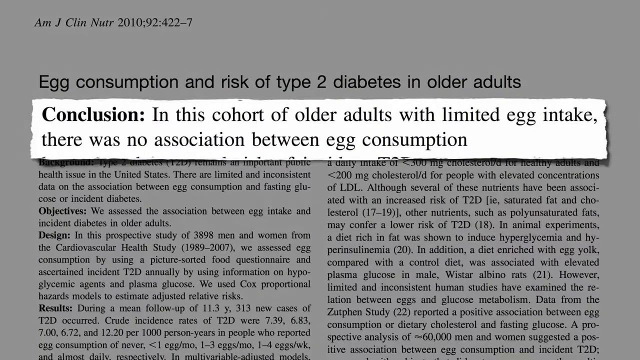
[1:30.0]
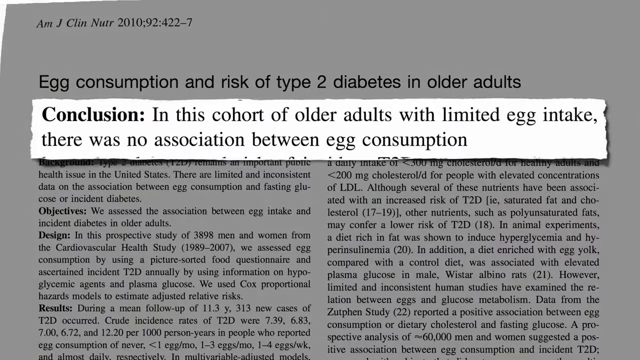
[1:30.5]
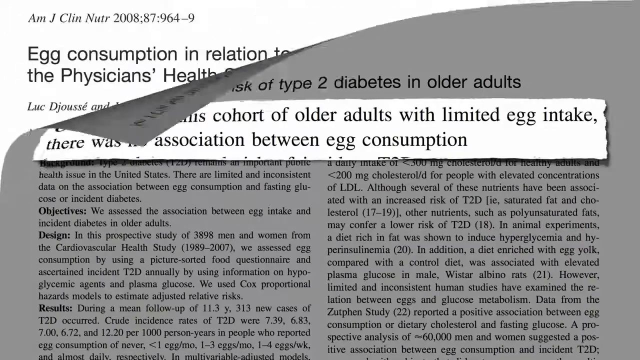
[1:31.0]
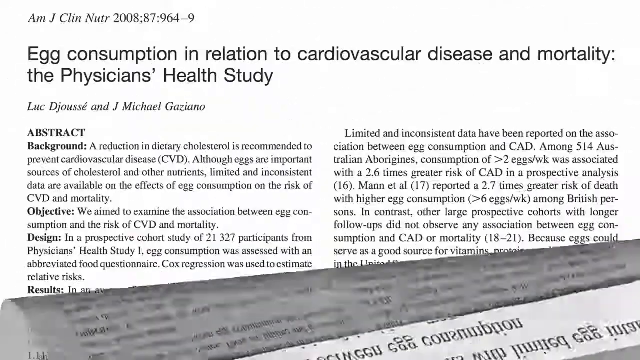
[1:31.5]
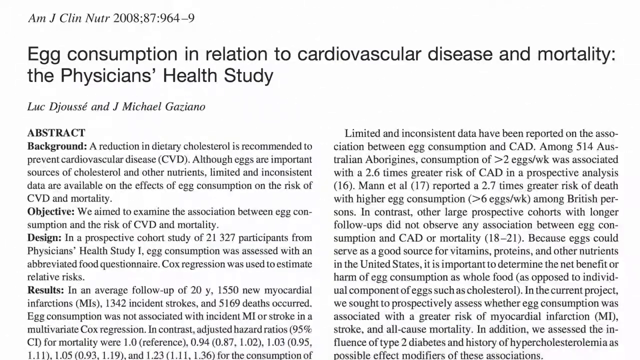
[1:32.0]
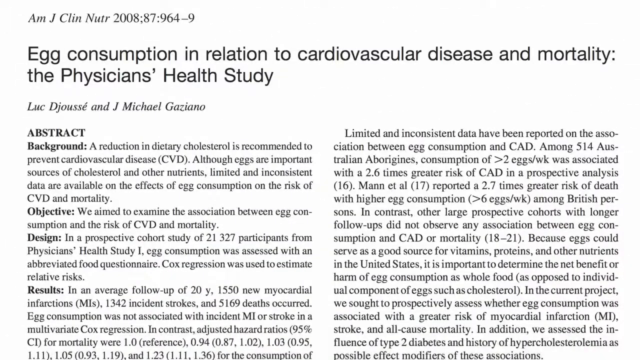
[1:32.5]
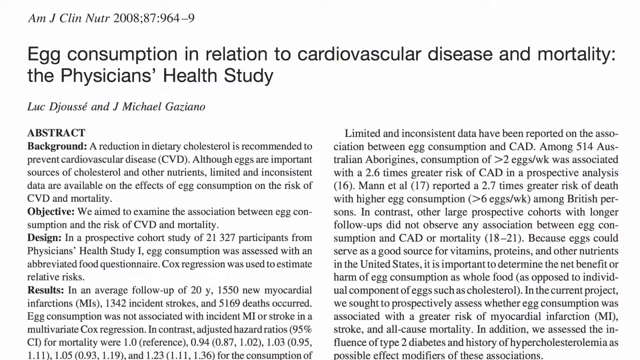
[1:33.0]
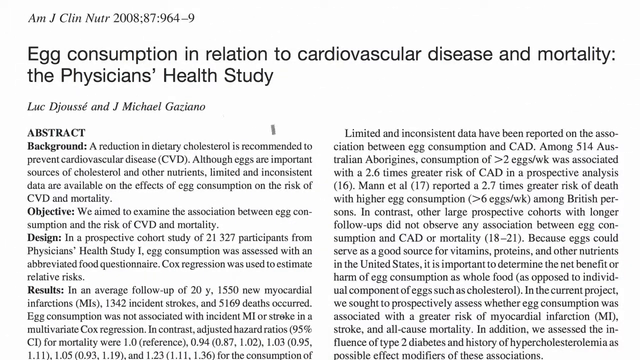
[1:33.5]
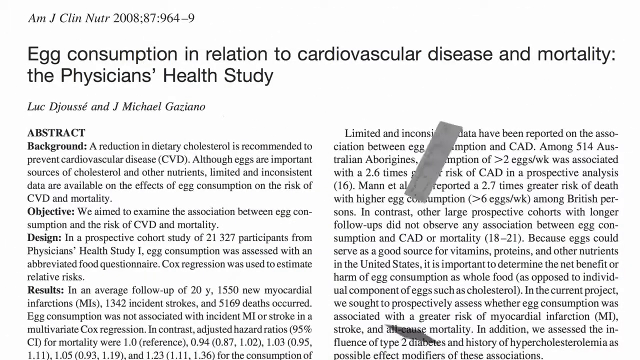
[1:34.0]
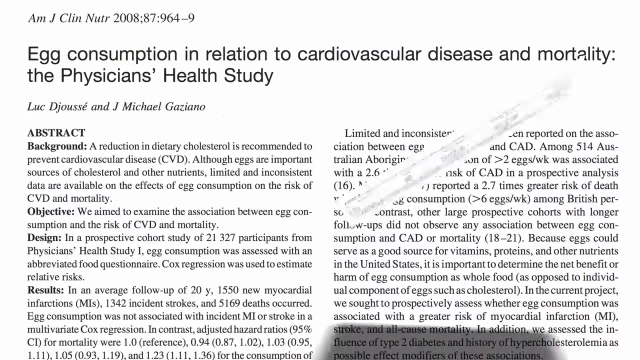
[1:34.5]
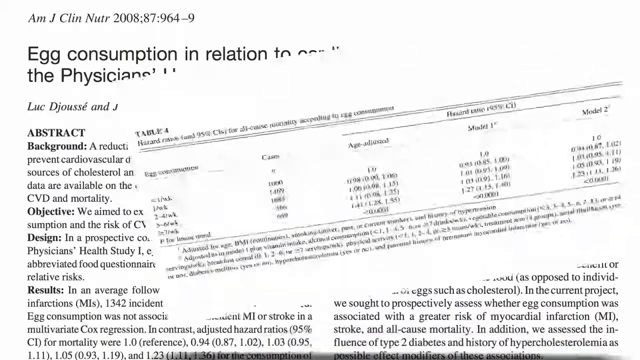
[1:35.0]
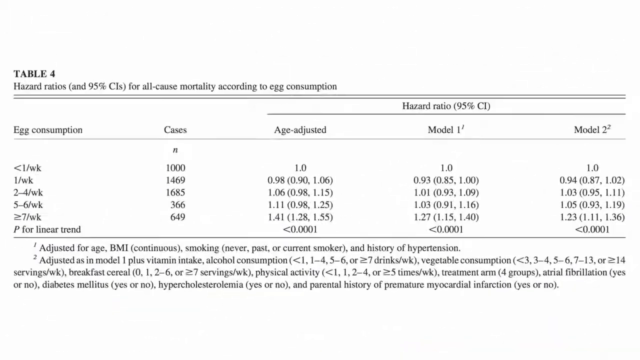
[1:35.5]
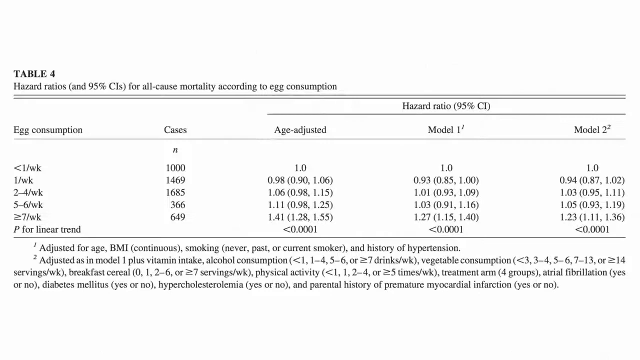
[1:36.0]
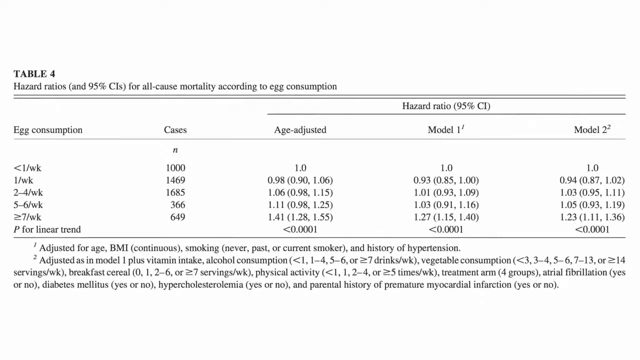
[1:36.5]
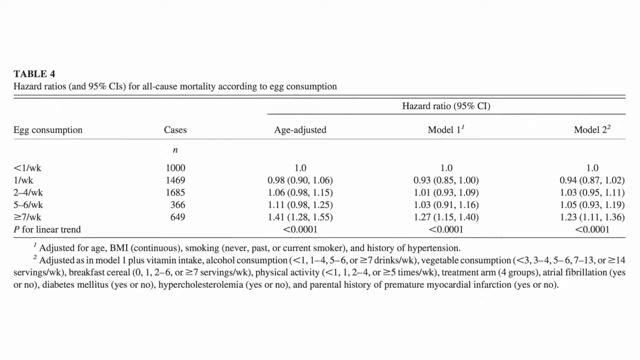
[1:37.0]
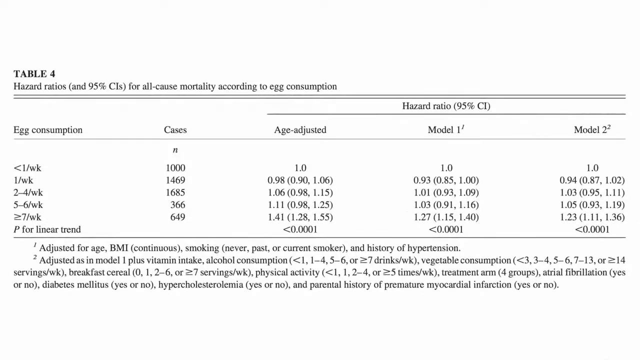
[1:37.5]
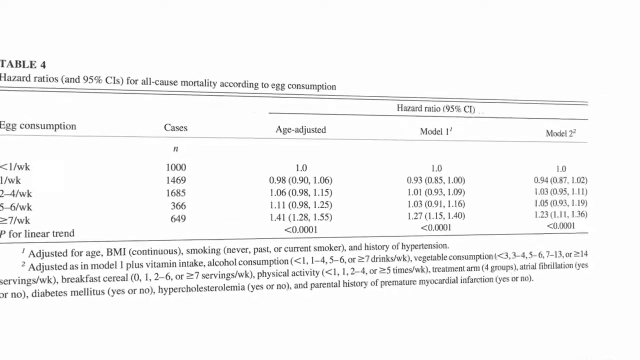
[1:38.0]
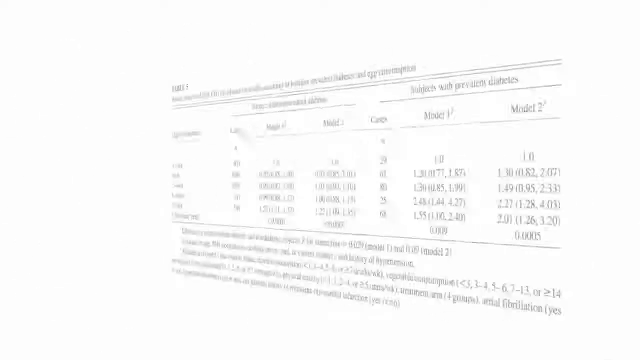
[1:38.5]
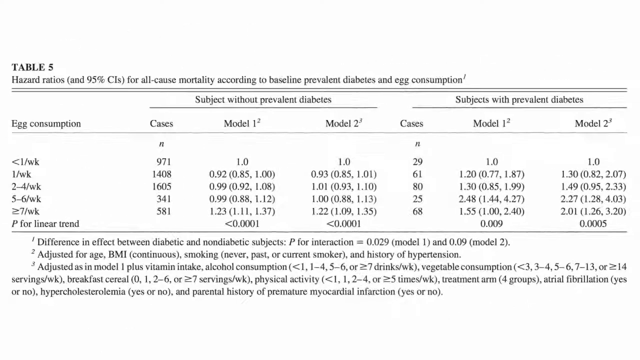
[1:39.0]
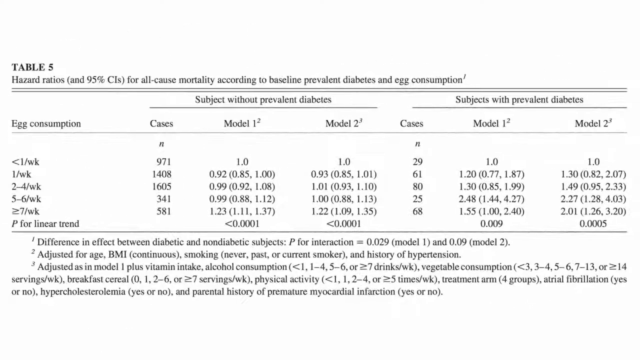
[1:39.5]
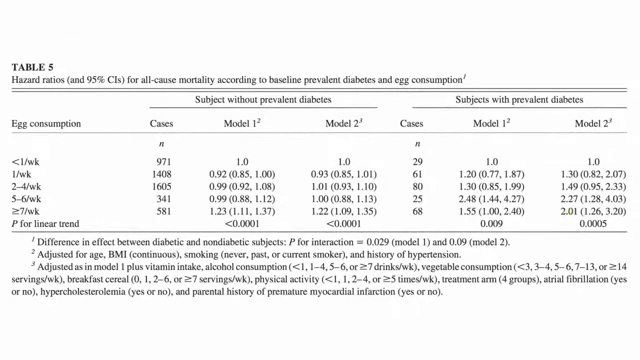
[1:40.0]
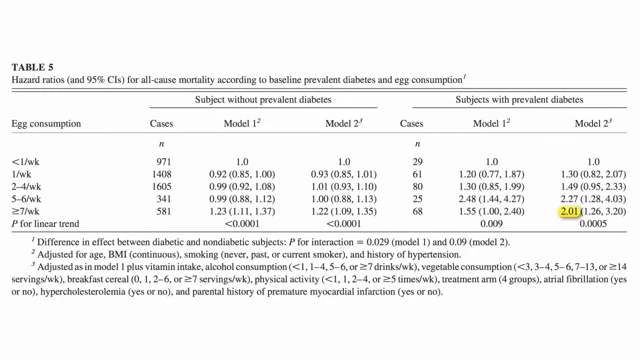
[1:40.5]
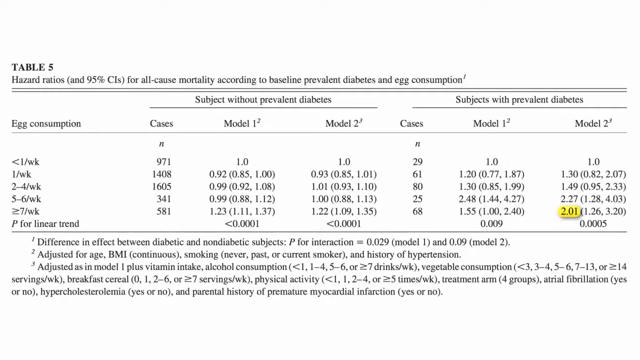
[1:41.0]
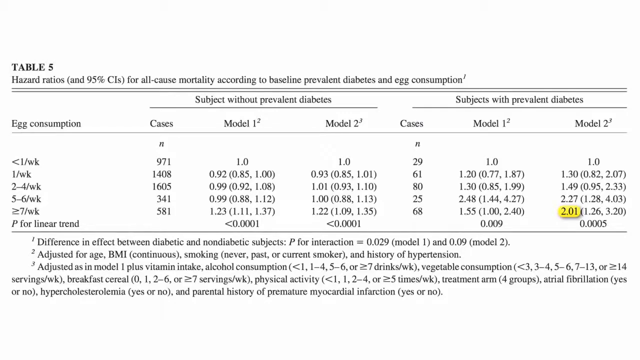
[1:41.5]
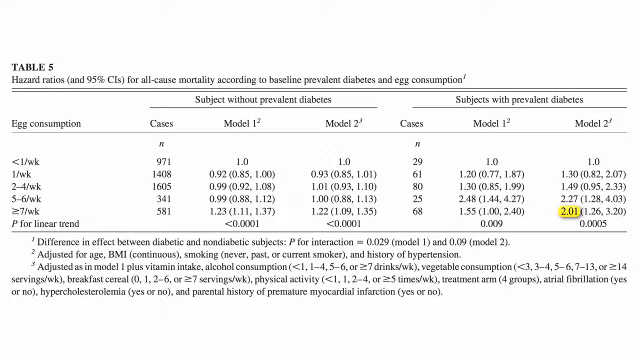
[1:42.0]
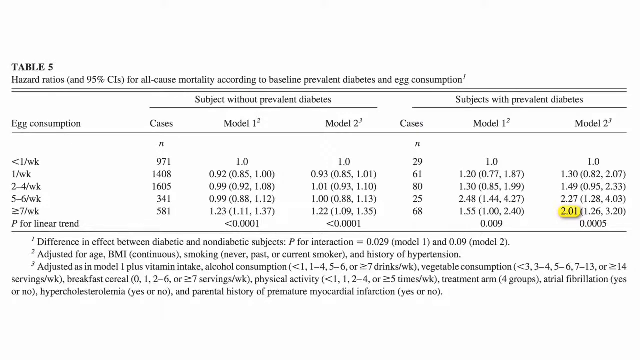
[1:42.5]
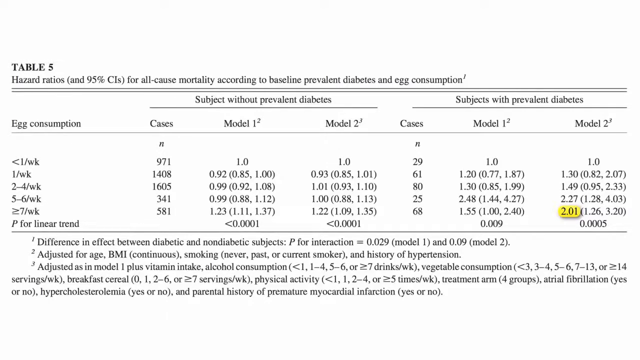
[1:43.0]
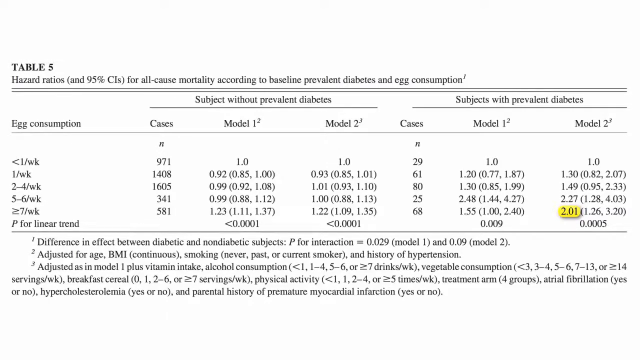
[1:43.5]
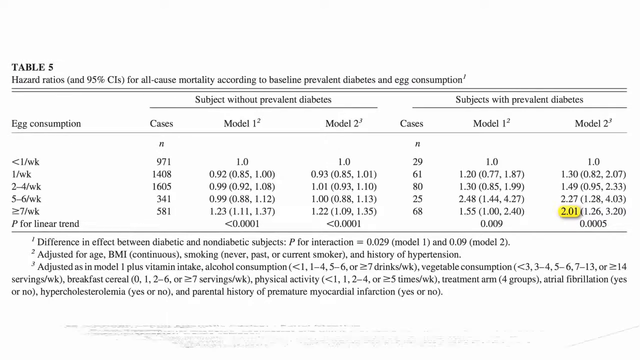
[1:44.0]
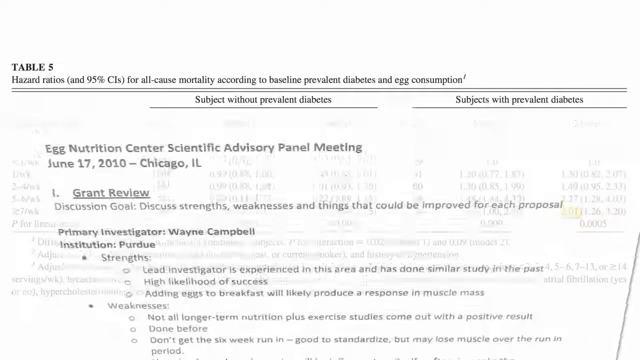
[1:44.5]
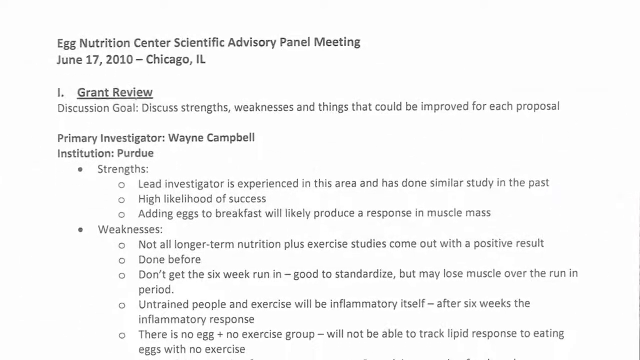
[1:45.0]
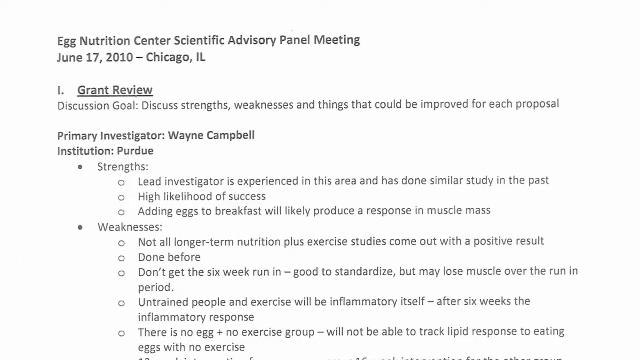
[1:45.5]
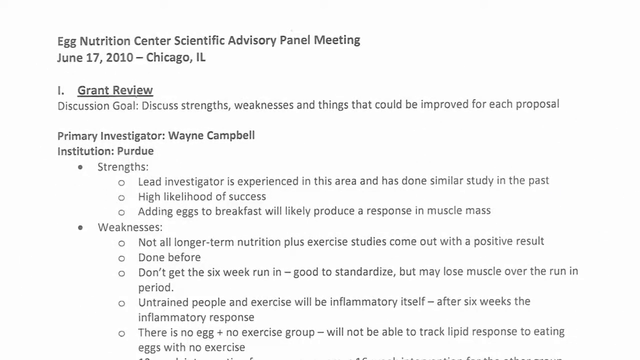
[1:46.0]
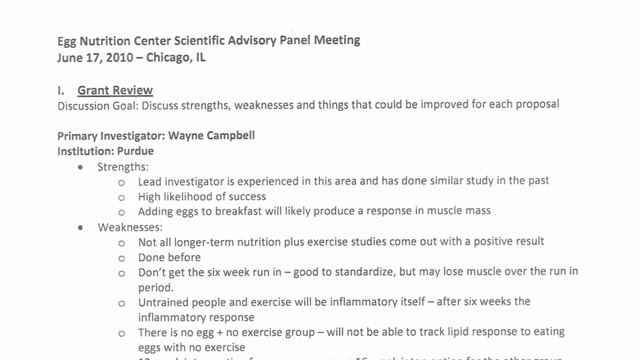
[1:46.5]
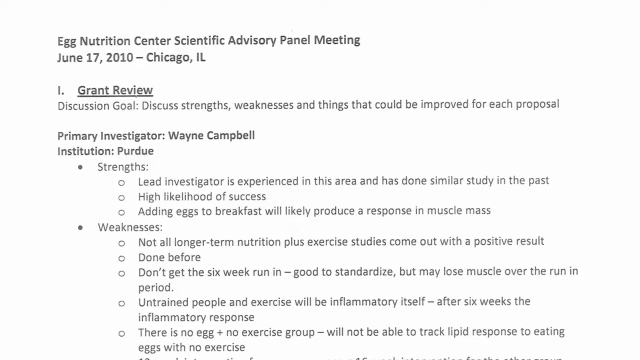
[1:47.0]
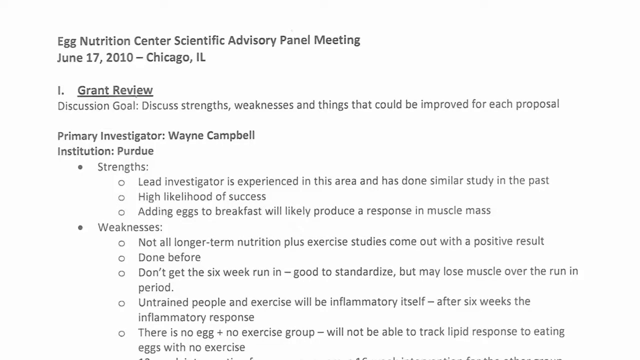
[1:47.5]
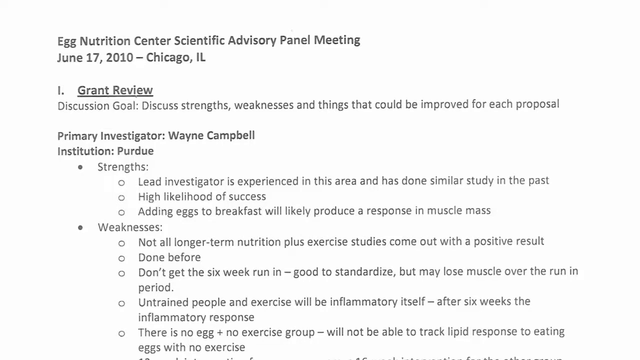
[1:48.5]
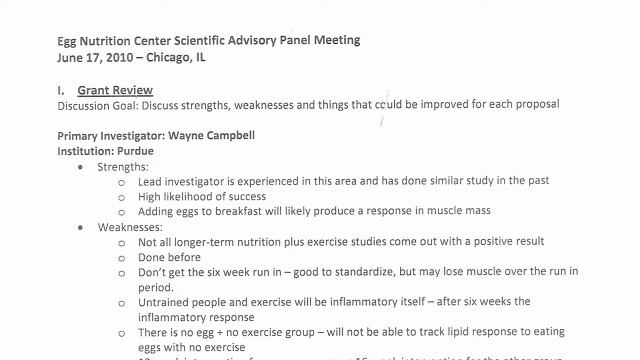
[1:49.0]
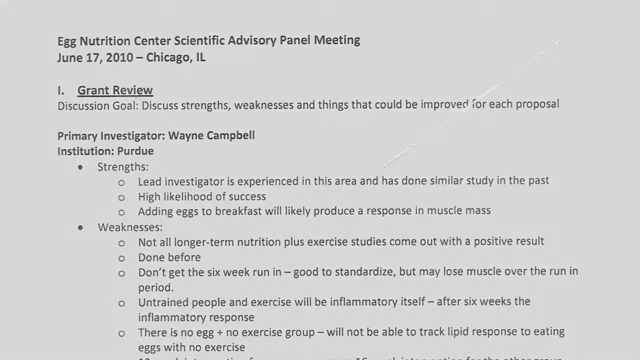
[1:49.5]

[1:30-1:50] Another article appears, its title at the top reading "Egg Consumption in Relation to Cardiovascular Disease and Mortality, the Physician's Health Study." A table of information appears, titled table number four, with the upper left corner reading "hazard ratios for all-cause mortality according to egg consumption." A different table, table number five, follows; its top left corner reads "hazard ratios for all-cause mortality according to baseline prevalent diabetes and egg consumption." A number, 2.01, is highlighted in yellow in the center of the far right side. Next comes what looks like an agenda for a meeting, with the title "Egg Nutrition Center Scientific Advisory Panel Meeting" in the top left corner.